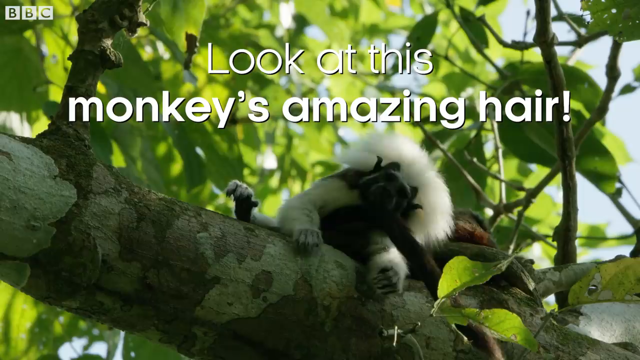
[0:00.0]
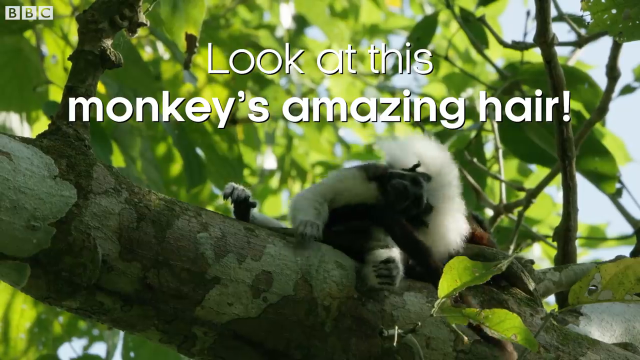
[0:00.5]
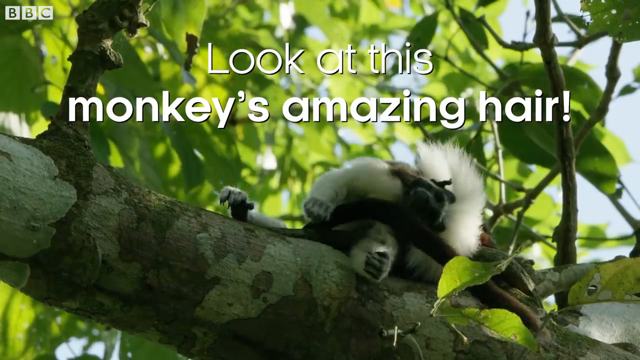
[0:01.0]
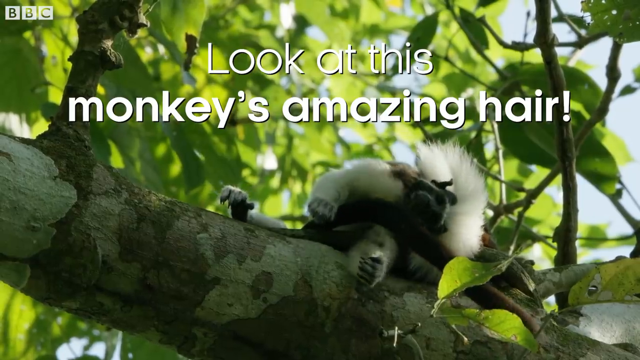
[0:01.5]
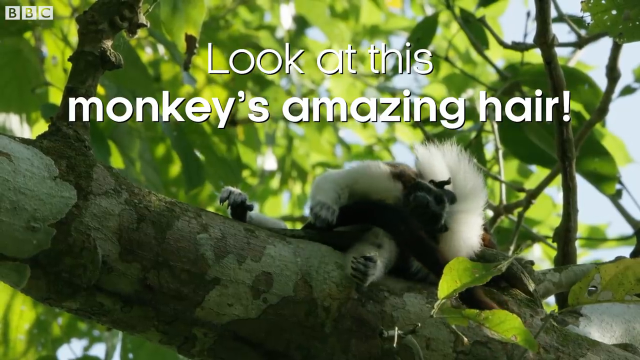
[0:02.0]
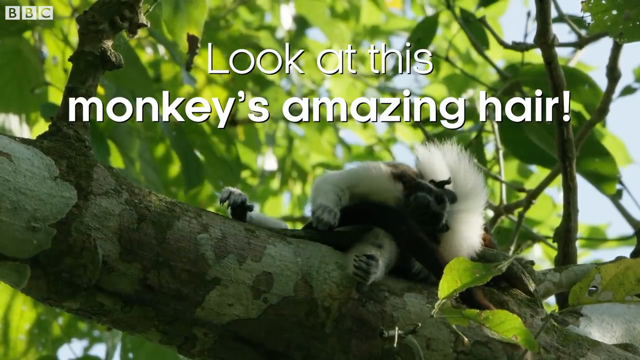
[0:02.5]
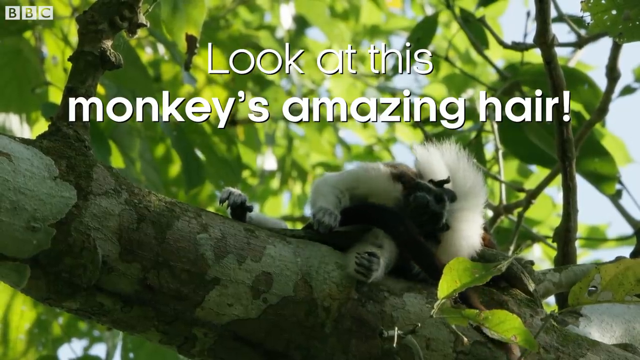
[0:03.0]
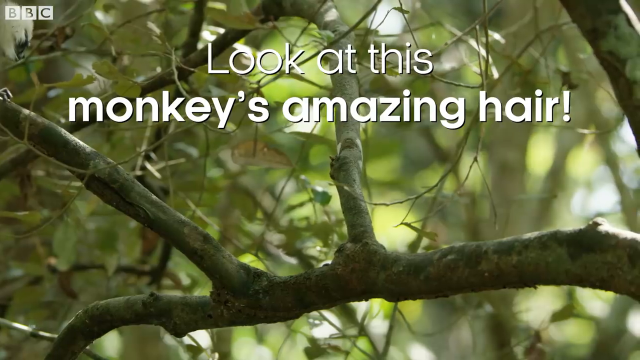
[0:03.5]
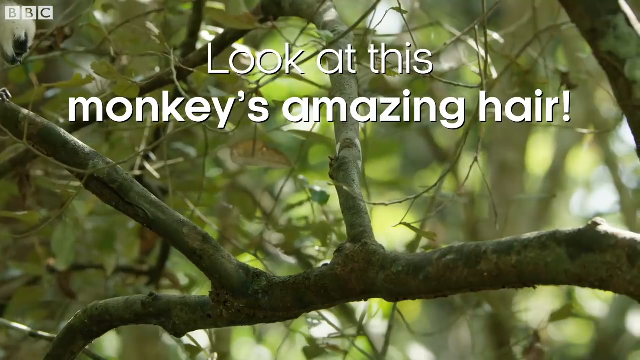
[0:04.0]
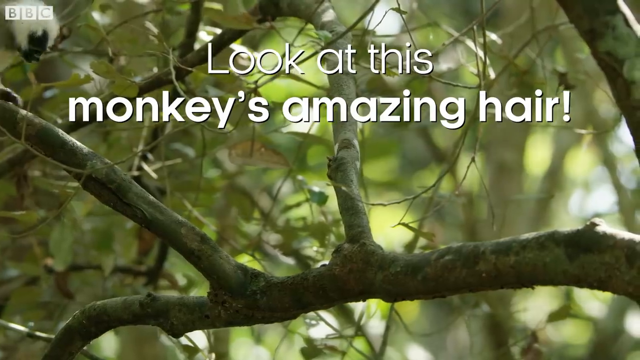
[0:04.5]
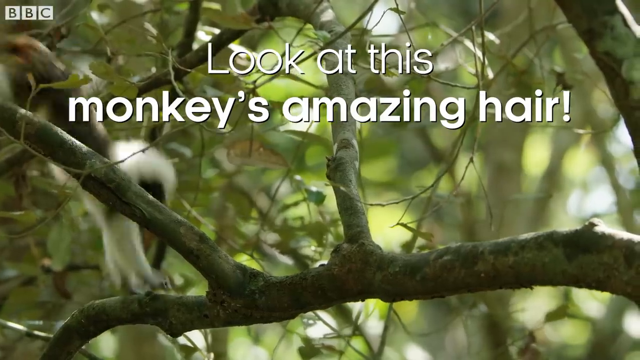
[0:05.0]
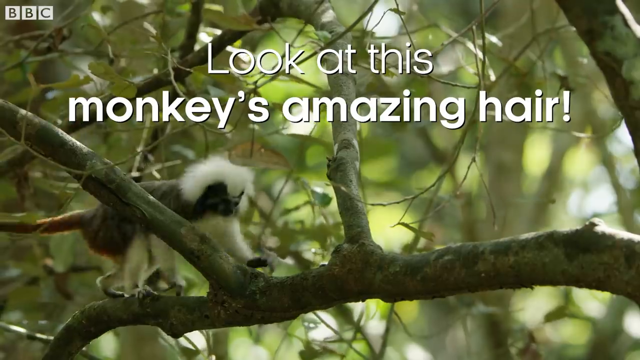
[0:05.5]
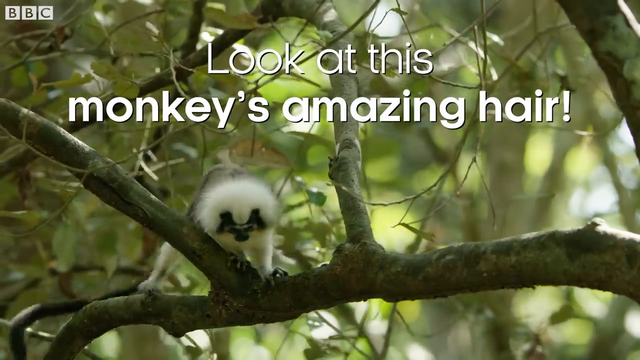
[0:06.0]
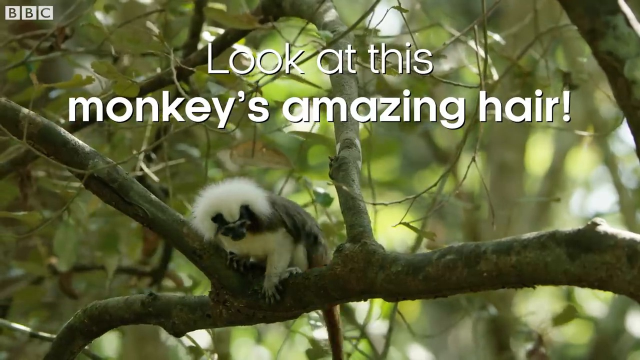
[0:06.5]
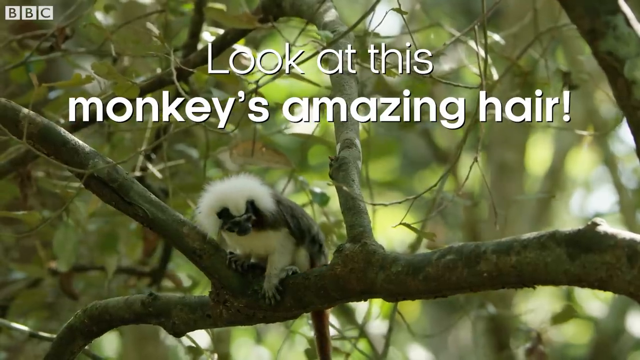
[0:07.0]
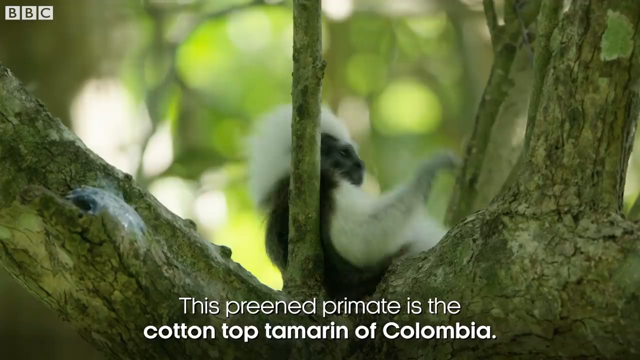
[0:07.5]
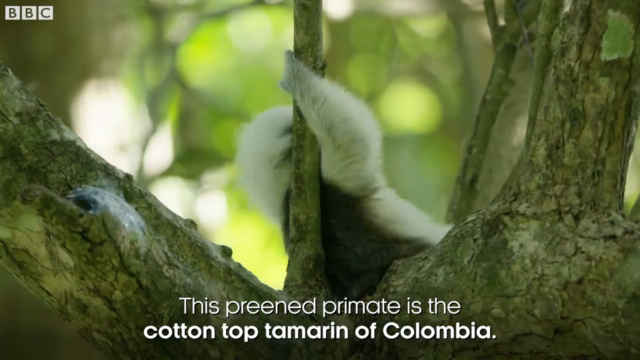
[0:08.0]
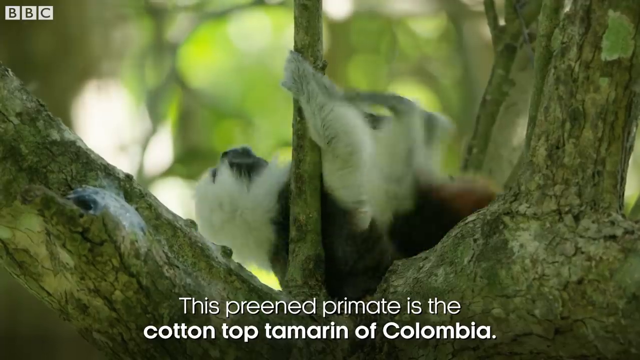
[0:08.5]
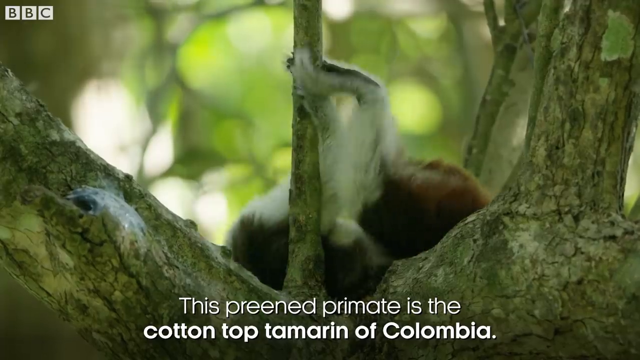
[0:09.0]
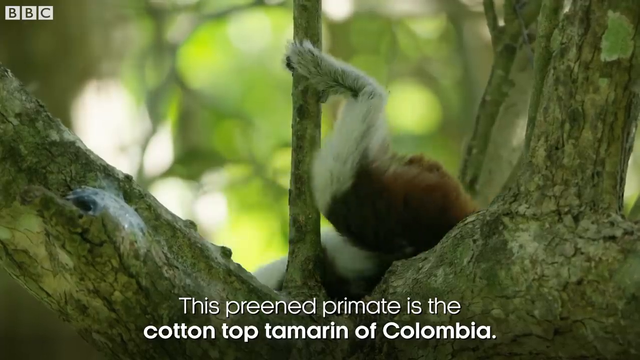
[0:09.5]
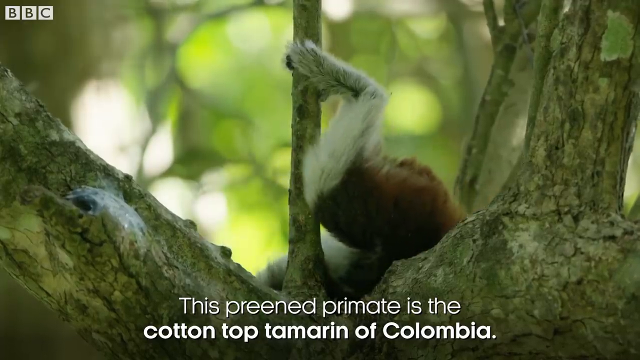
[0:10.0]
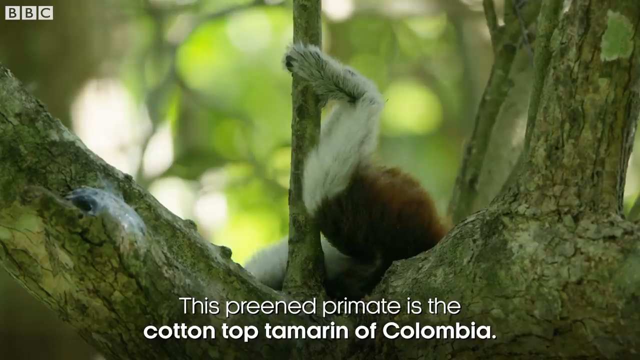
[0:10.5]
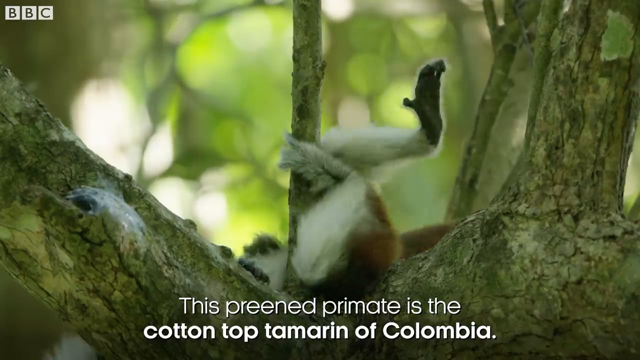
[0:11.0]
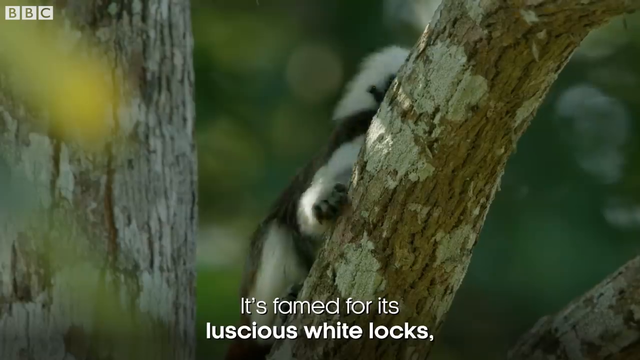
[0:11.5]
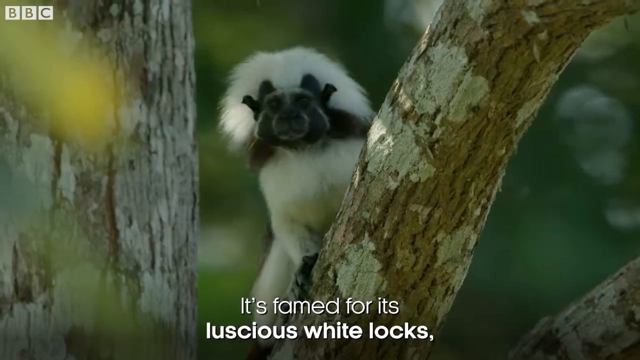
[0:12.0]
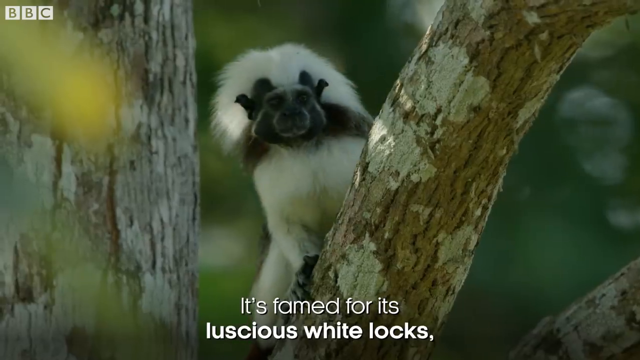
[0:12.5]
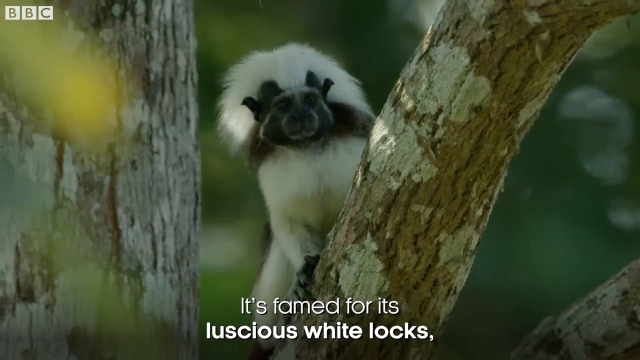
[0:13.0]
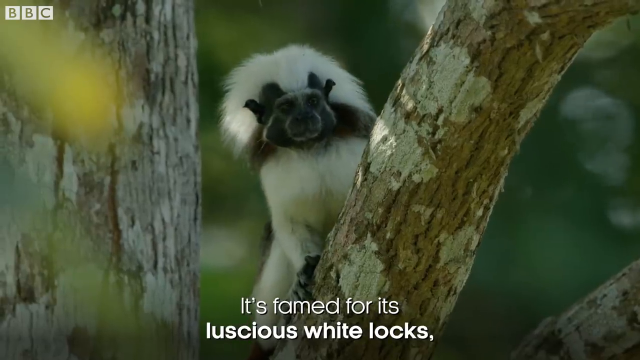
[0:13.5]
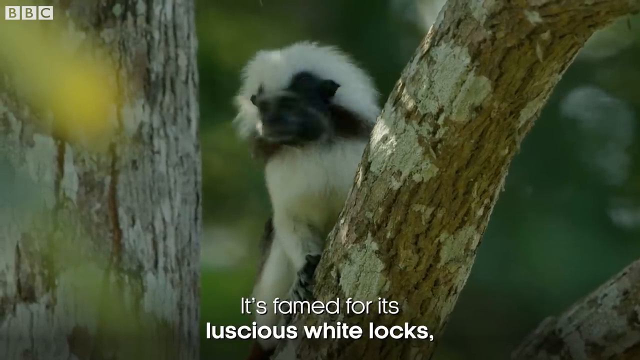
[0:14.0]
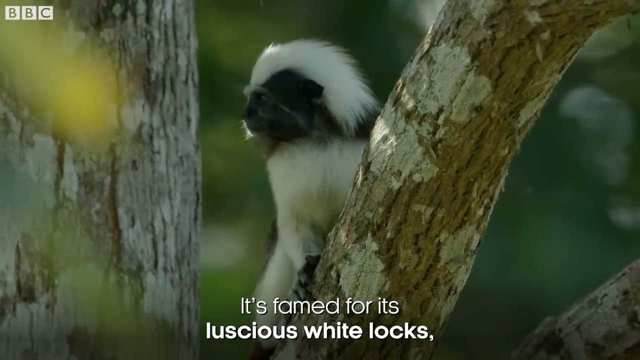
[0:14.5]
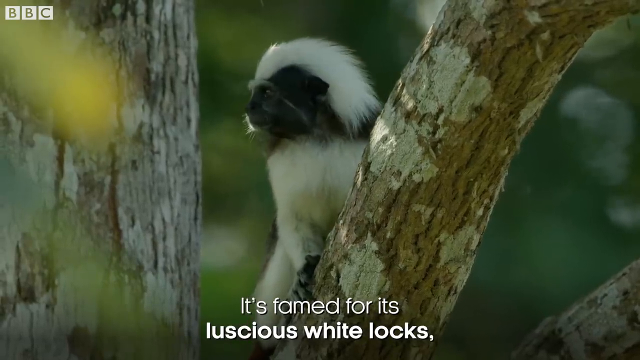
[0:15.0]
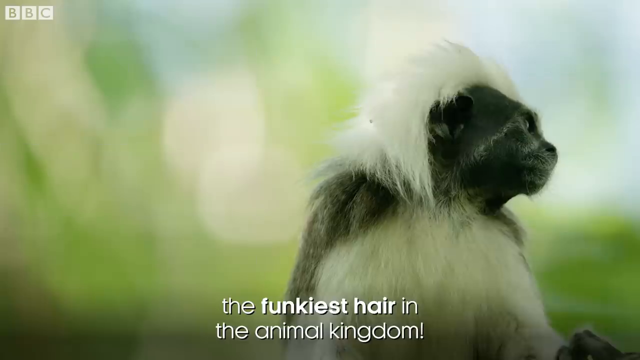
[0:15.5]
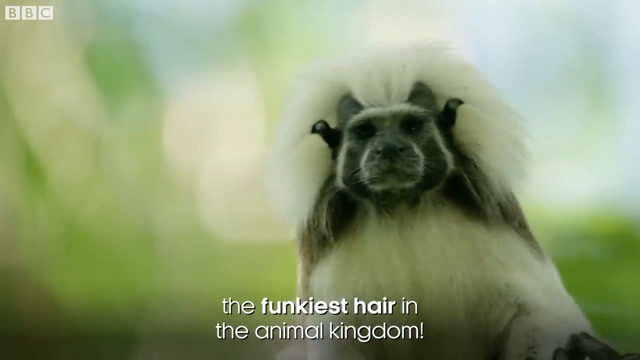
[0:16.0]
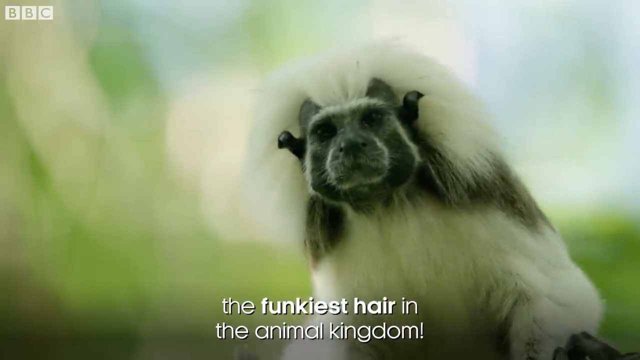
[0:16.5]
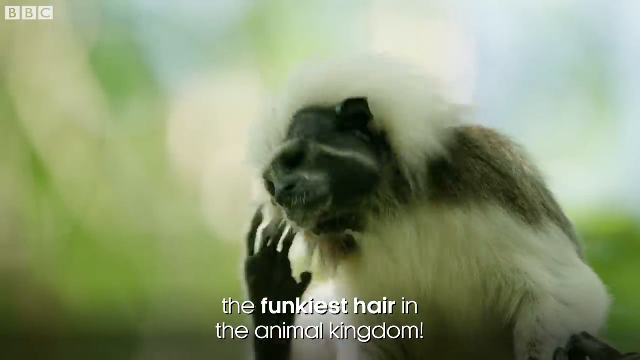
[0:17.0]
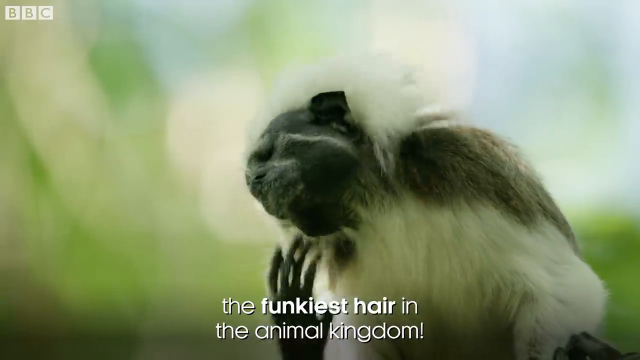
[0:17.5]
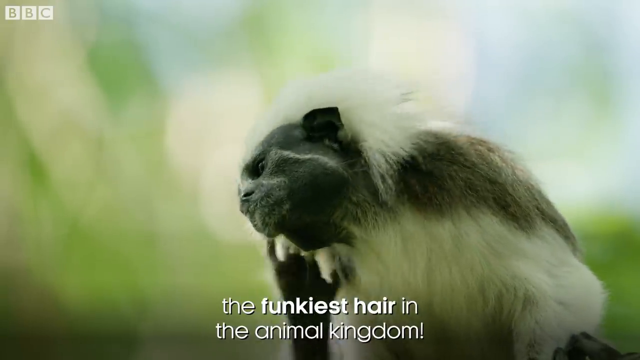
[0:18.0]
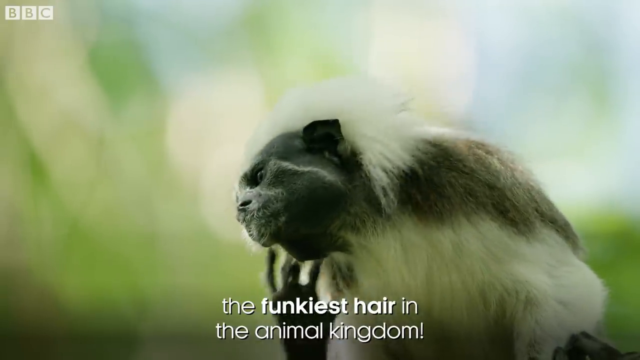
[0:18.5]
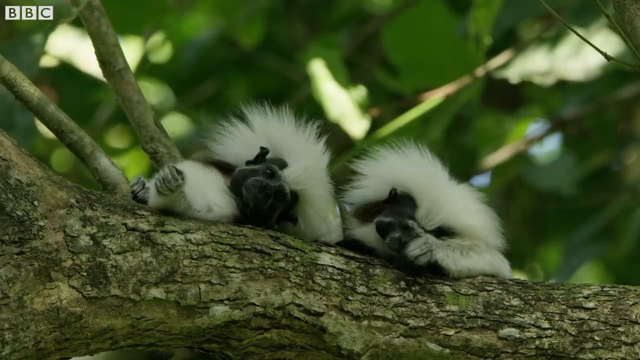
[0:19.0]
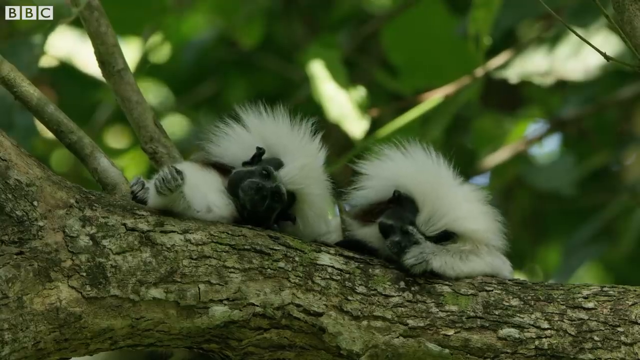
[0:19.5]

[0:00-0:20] White text reads "Look at this monkey's amazing hair," with "monkey's amazing hair" in bold. A monkey with kind of a white afro of hair, white hair like Albert Einstein's, and a black-grayish face scratches himself with his right hand. He is hanging out on a large tree branch in what looks like a forest, jungle or wooded area. White subtitle text runs along the bottom of the video, and "BBC" appears in the top left corner. Other text reads "the funkiest hair in the animal kingdom." More white text identifies the primate as "the cotton-top tamarin of Columbia" and says "It's famed for its luscious white locks."